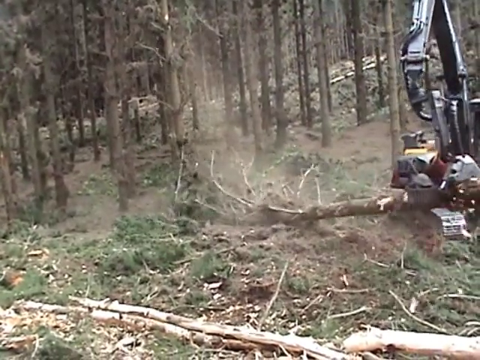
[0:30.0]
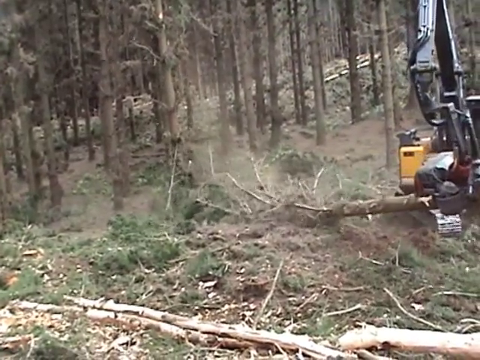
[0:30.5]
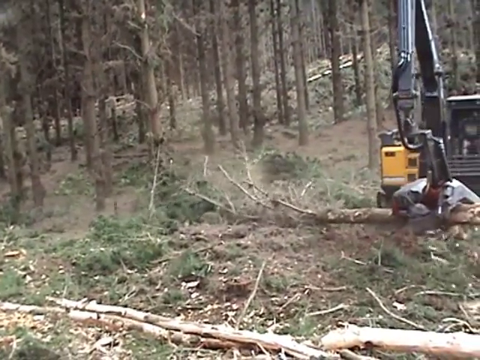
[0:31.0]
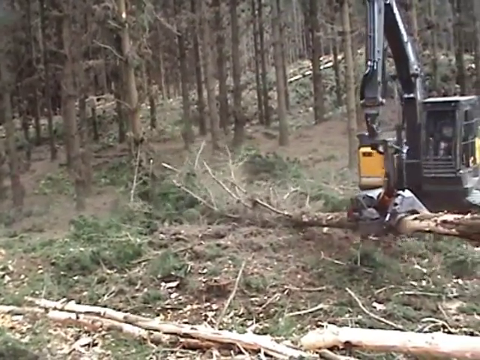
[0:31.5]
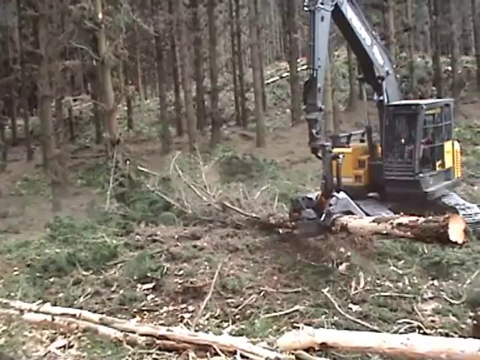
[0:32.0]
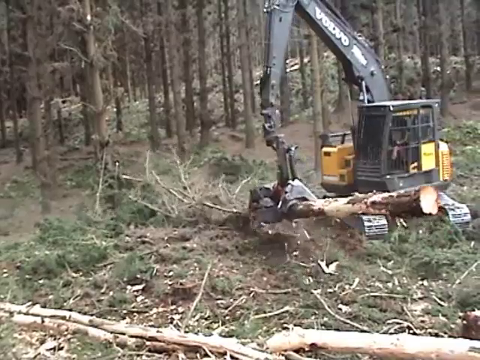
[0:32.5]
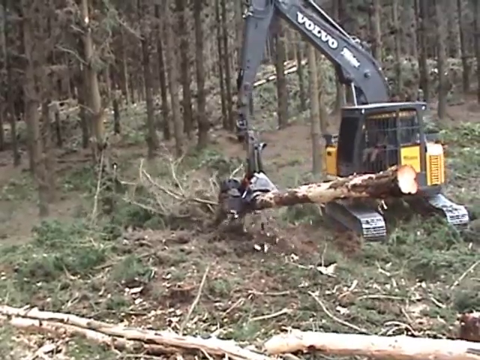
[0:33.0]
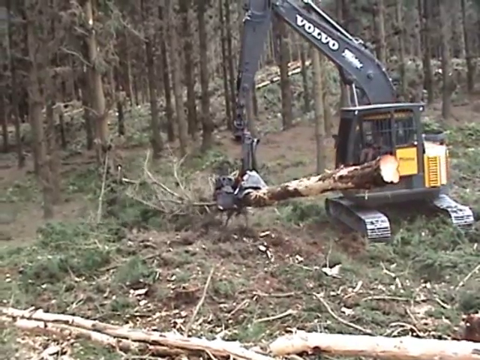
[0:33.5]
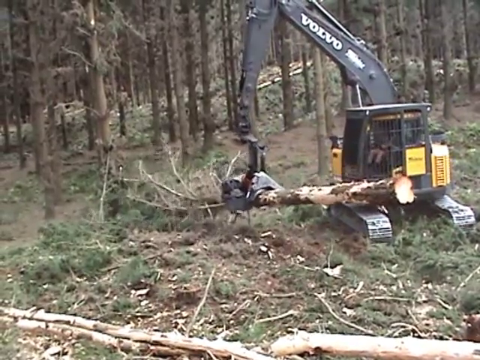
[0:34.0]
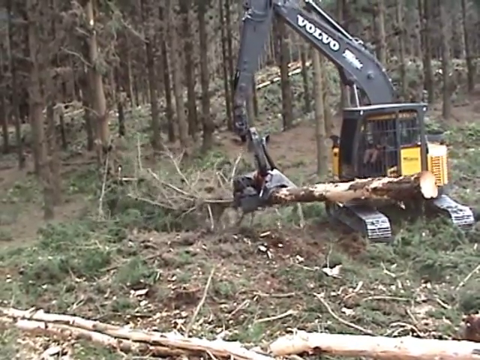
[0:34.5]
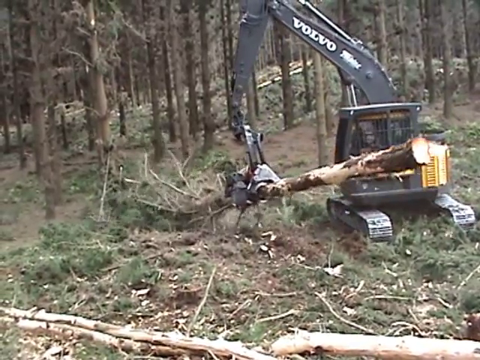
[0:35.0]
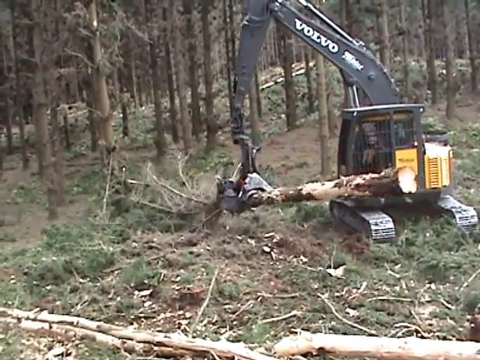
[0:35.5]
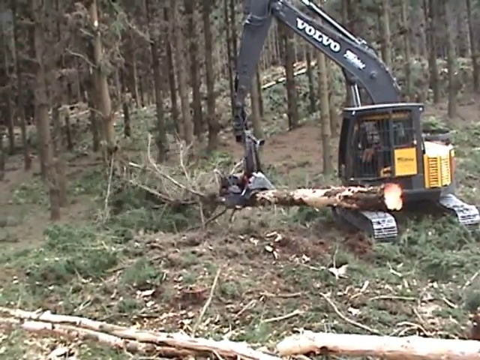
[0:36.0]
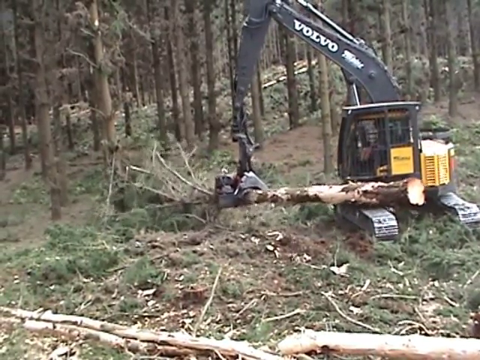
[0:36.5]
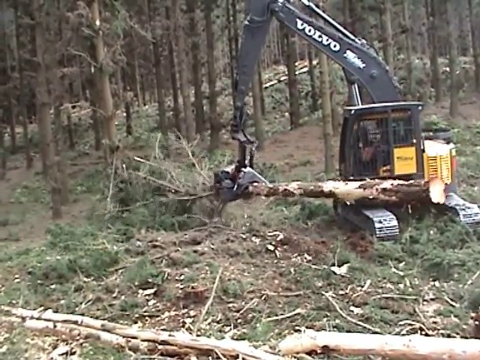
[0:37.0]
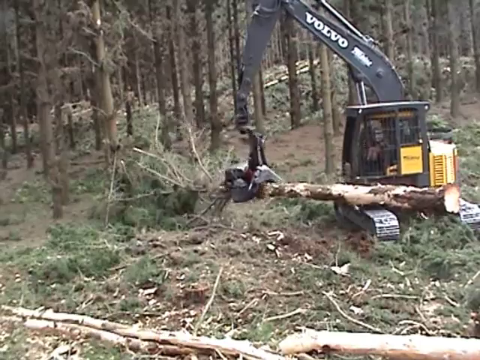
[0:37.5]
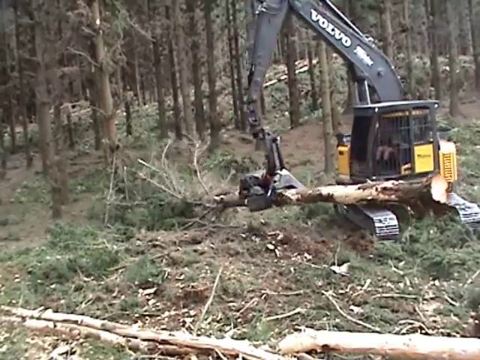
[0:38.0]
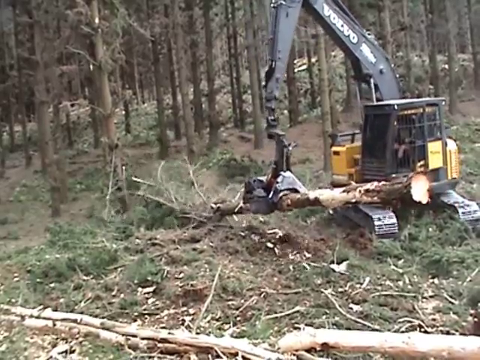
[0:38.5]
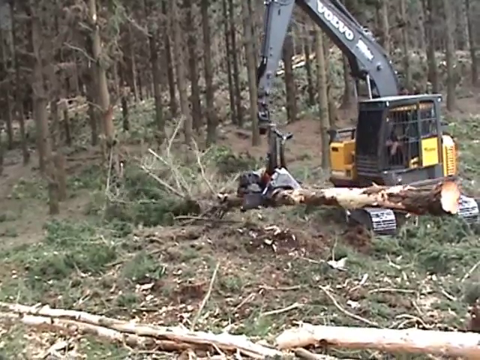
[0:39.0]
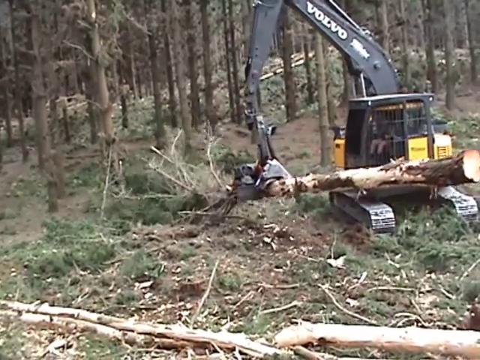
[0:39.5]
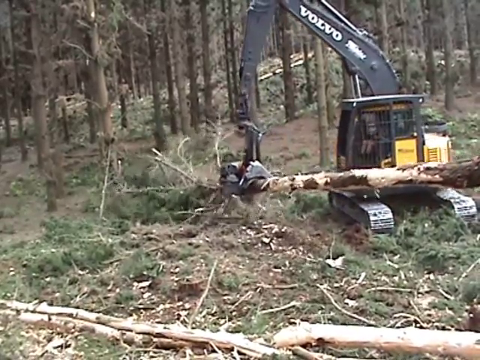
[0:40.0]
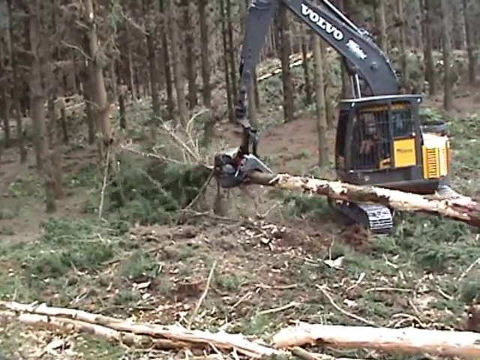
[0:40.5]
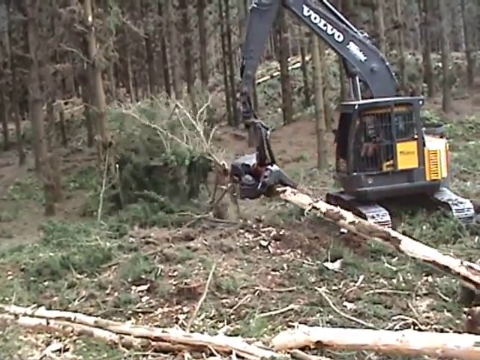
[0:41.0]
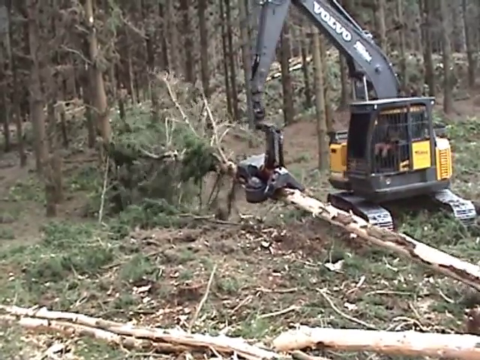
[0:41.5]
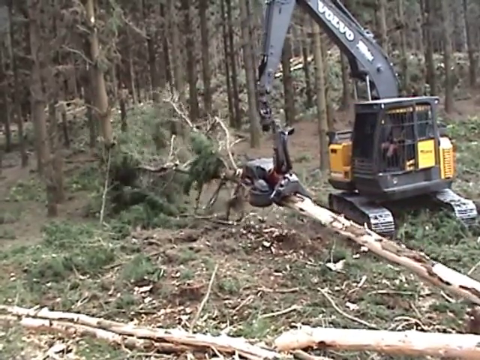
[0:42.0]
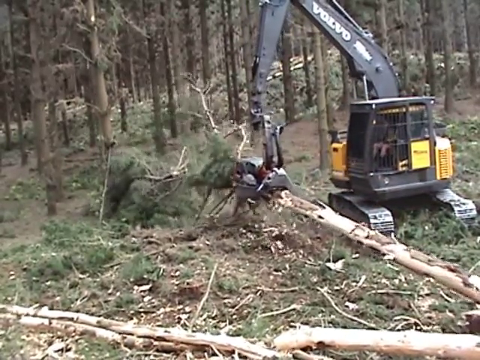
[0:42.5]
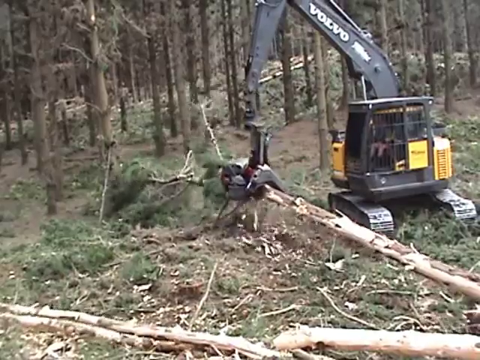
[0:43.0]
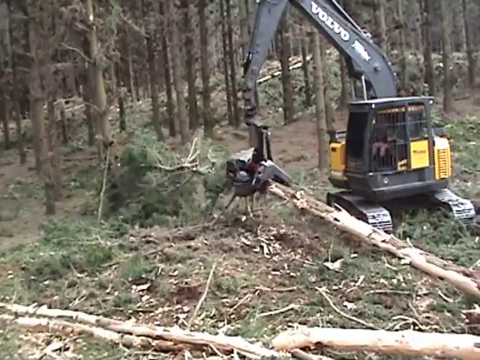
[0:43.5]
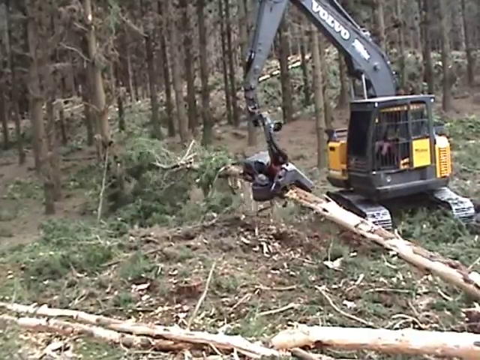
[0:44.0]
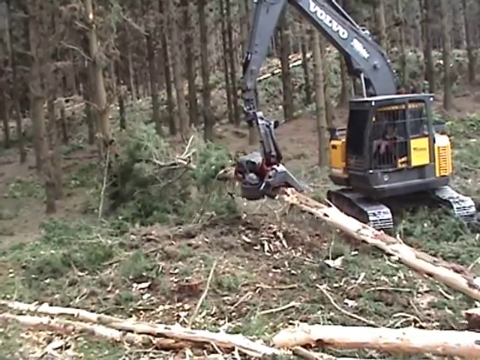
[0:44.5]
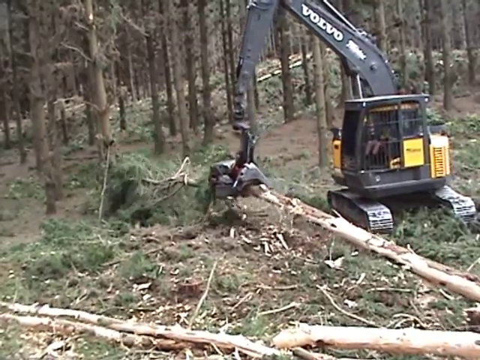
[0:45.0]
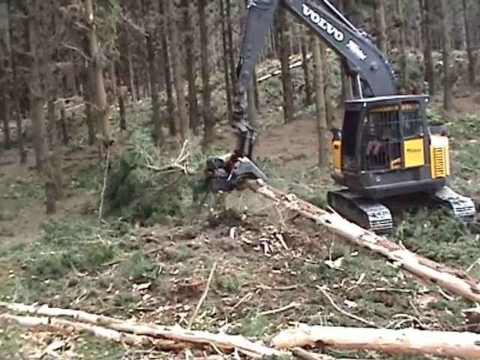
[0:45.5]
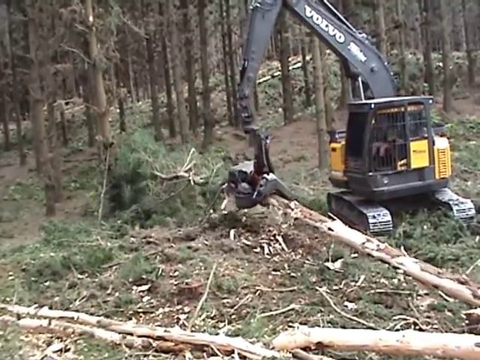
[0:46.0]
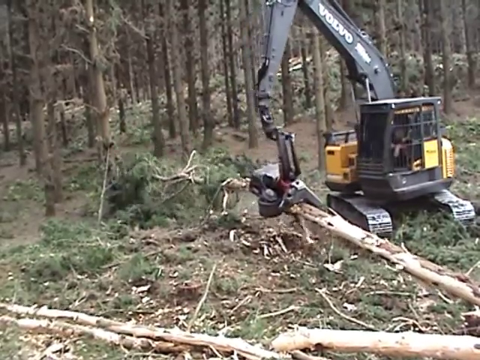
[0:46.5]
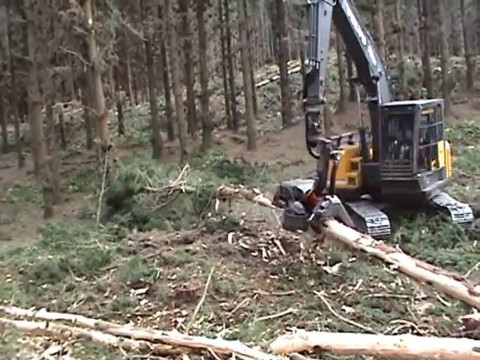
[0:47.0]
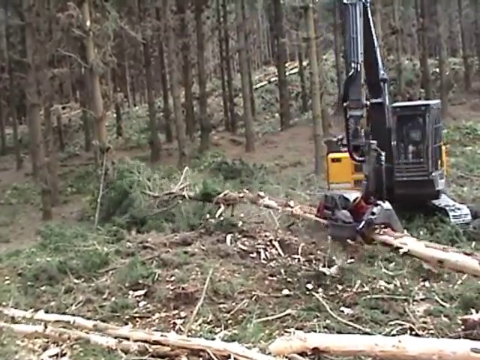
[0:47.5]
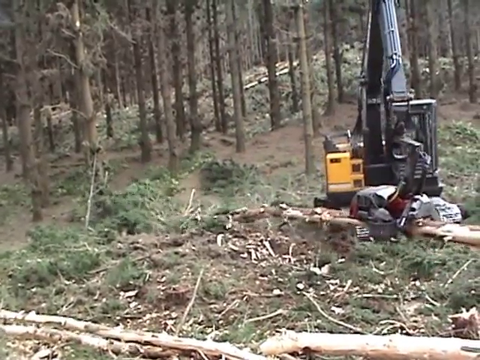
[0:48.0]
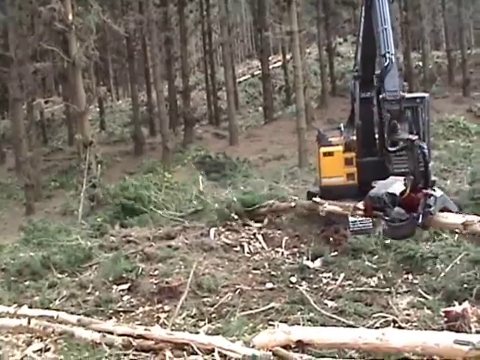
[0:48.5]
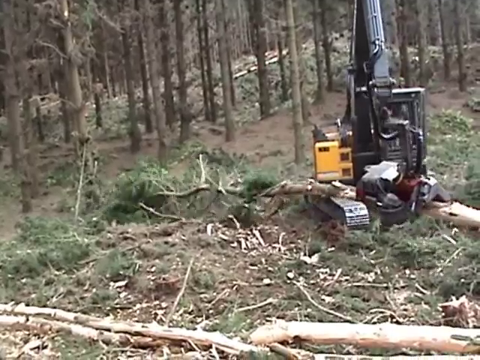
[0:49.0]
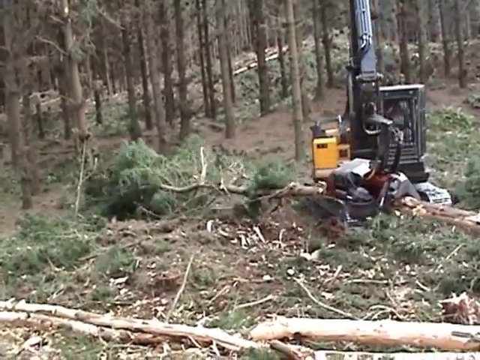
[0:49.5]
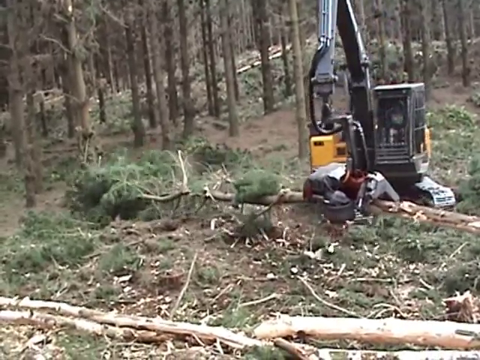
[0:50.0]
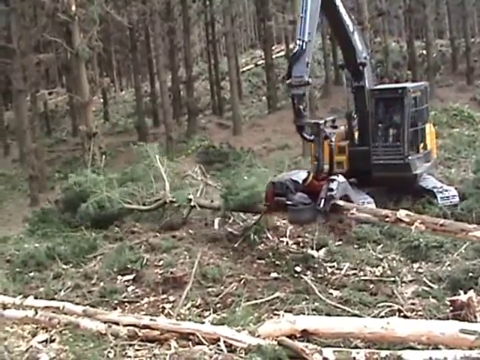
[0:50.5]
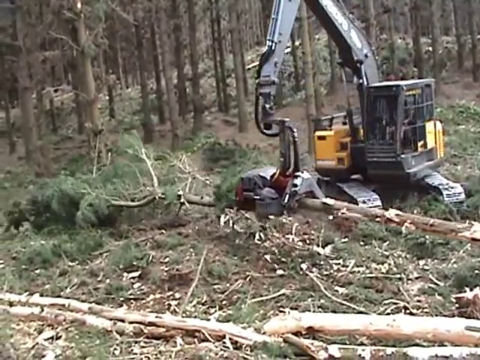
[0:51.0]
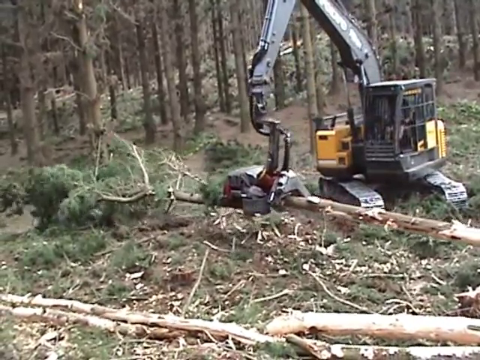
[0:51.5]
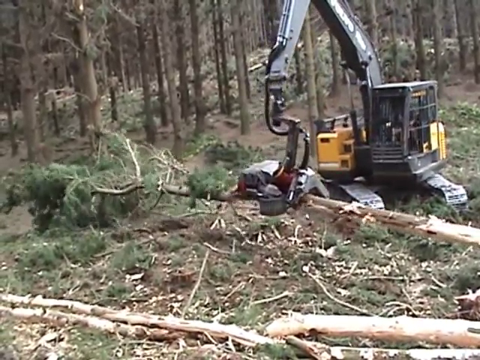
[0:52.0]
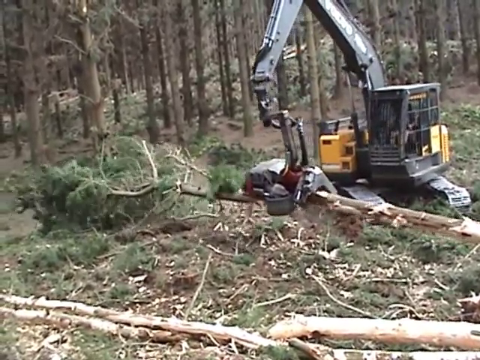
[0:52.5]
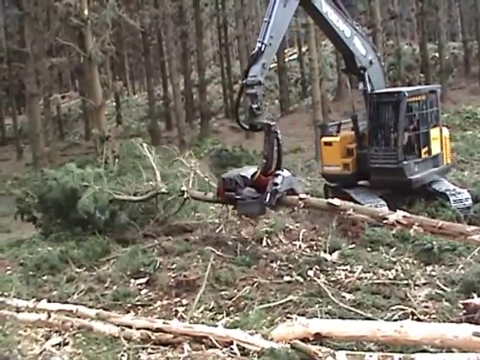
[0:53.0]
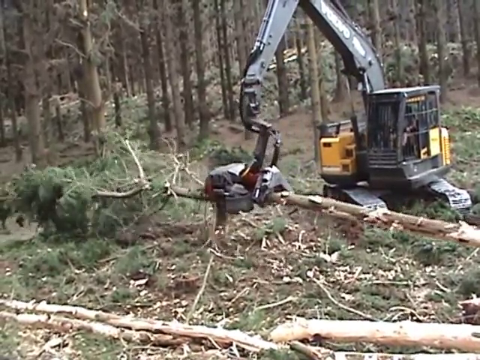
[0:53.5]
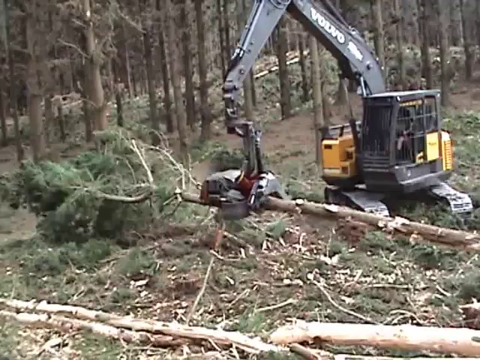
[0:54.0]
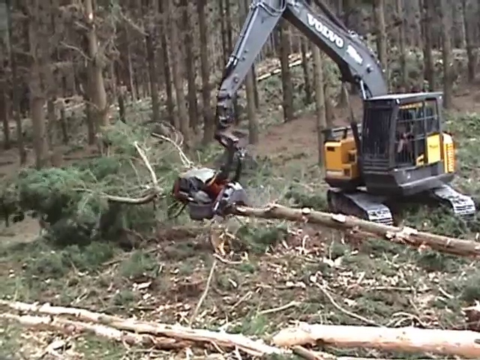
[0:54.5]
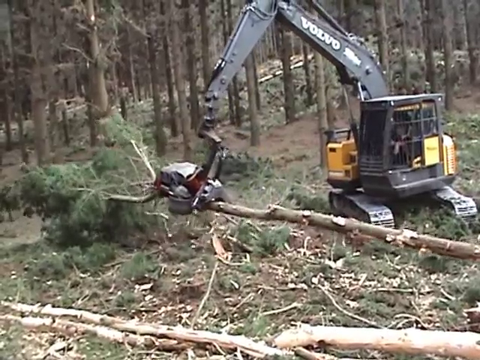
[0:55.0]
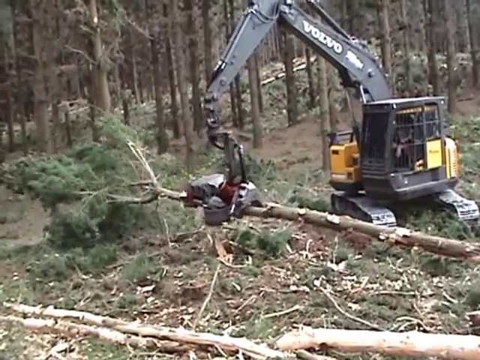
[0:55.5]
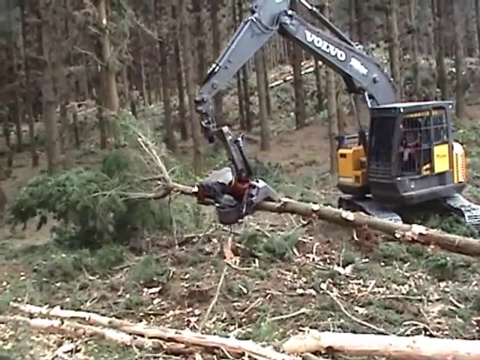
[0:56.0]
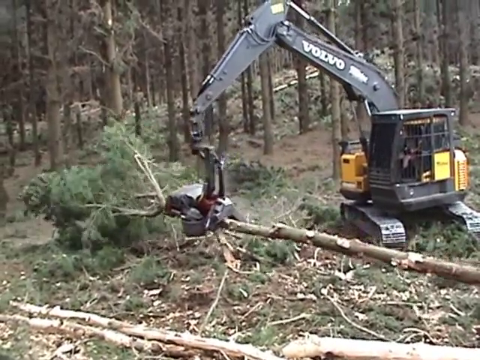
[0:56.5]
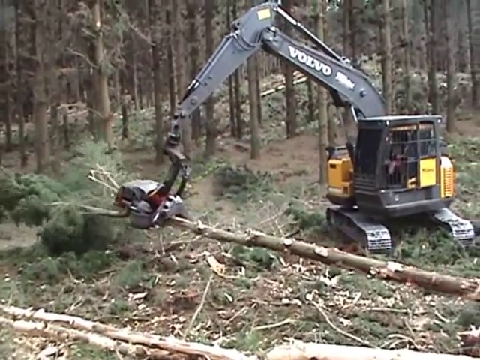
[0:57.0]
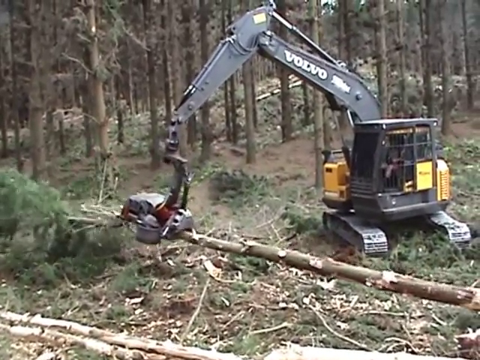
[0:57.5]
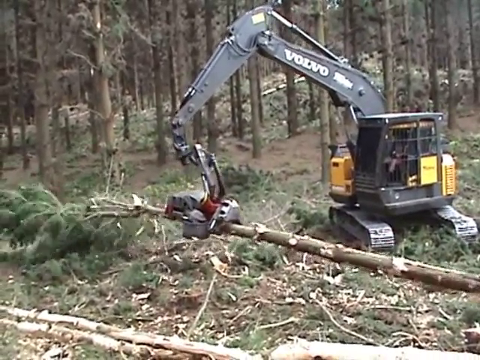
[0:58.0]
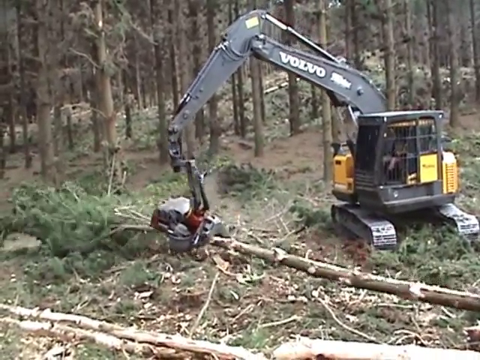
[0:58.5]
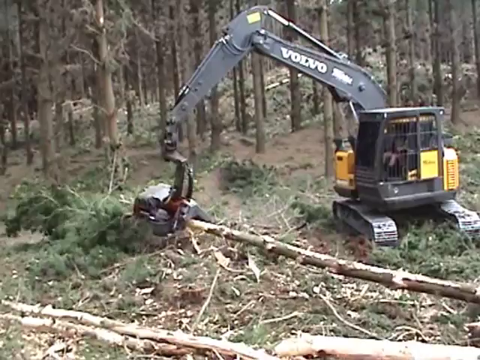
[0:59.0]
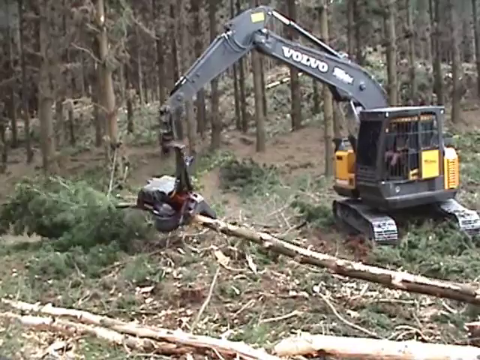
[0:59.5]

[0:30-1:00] The attachment at the bottom of the Volvo arm slides up and down the trunk of the tree, shedding the branches and twigs that stick out so that just the trunk is left. It does not do a clean job: many notches, bumps and small branches remain where branches were, rather than a smooth trunk. It stops near the top of the tree, possibly because the trunk is much thinner there. The trunk is bare from the bottom almost to the top, where a narrow section still has its leaves and branches attached, like a child's drawing of a tree: a straight line with some leaves at the top. The attachment seems to shift up and down the tree in a very odd way, so the physics do not look quite right. Someone is visible inside the cab of the Volvo, operating it.